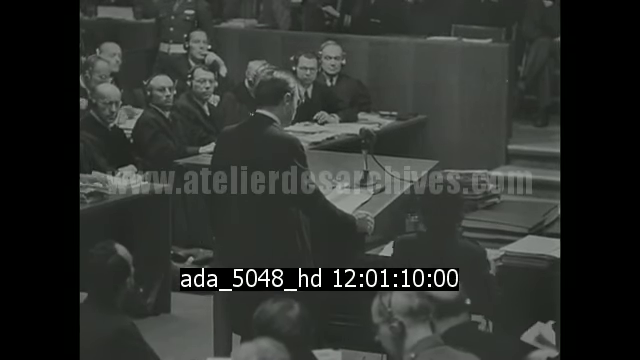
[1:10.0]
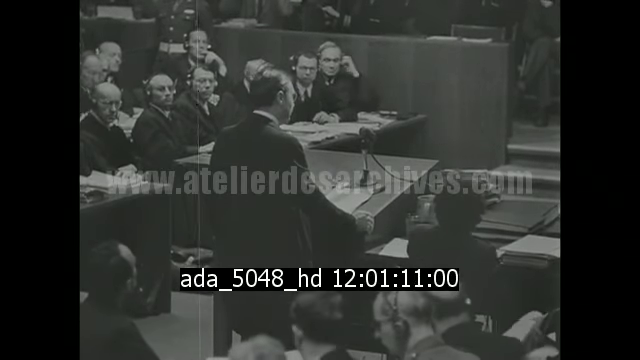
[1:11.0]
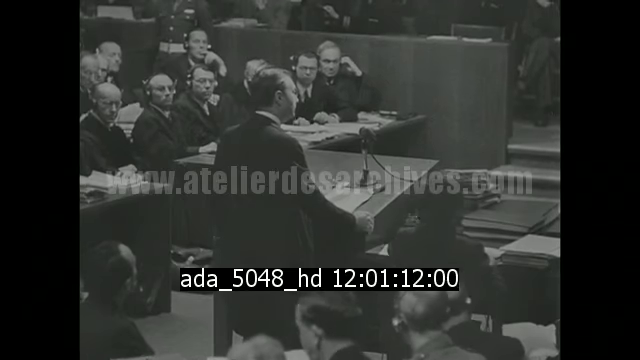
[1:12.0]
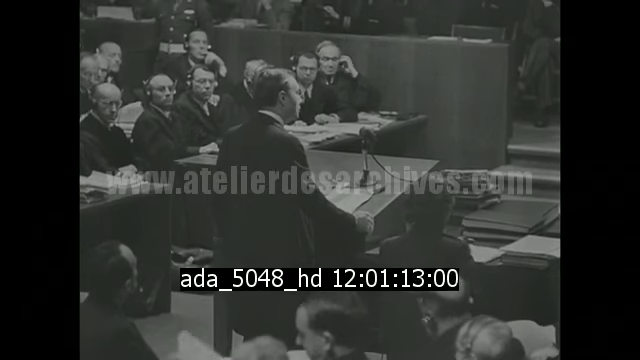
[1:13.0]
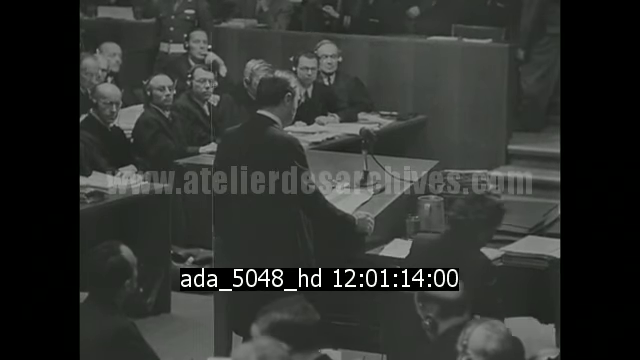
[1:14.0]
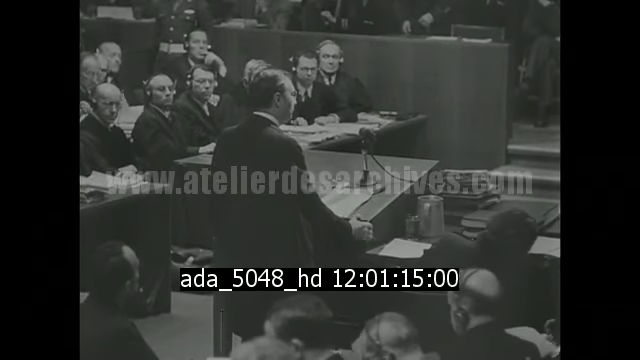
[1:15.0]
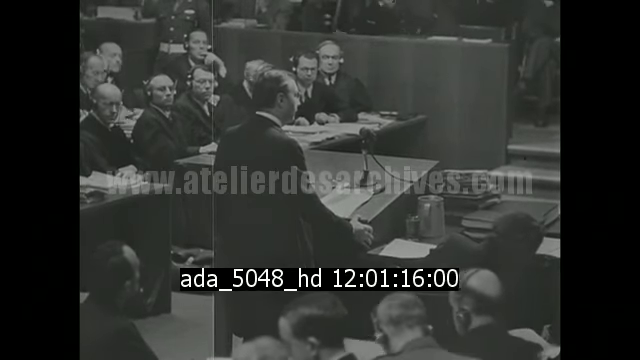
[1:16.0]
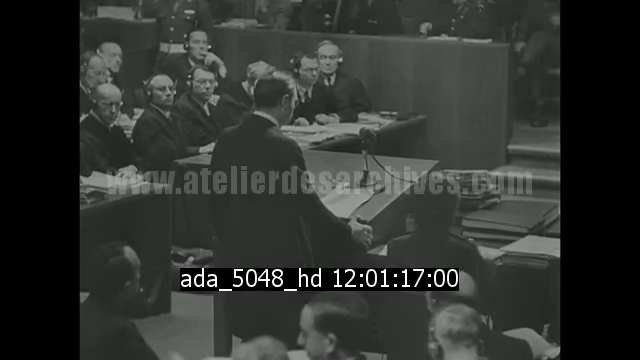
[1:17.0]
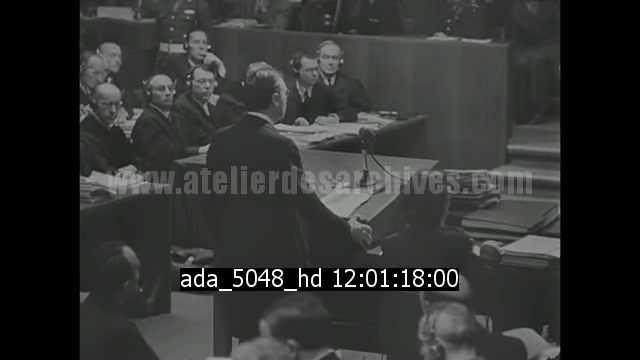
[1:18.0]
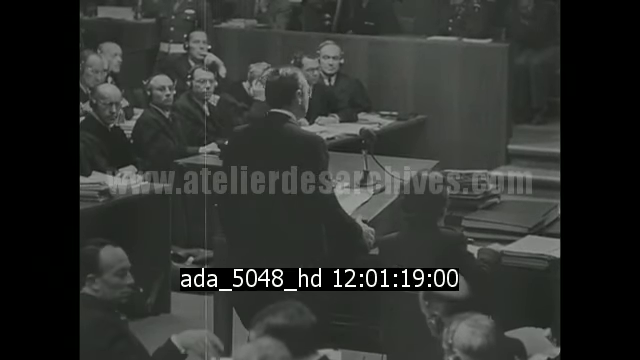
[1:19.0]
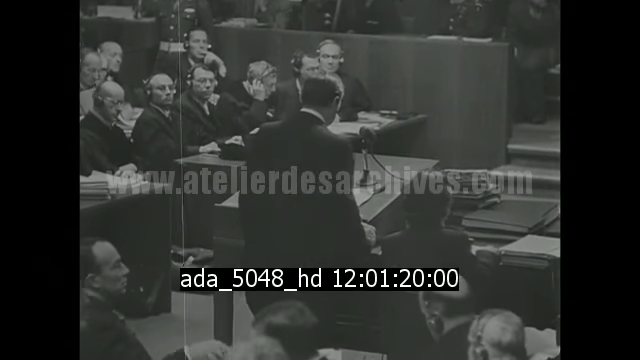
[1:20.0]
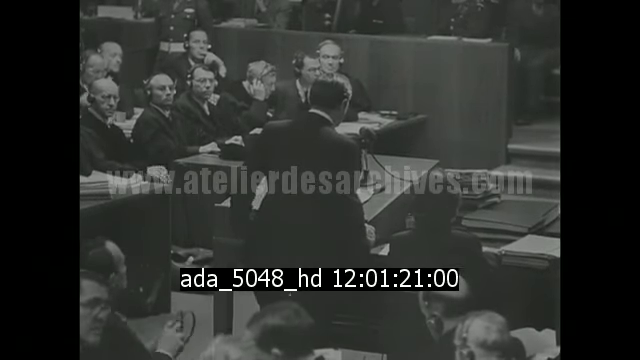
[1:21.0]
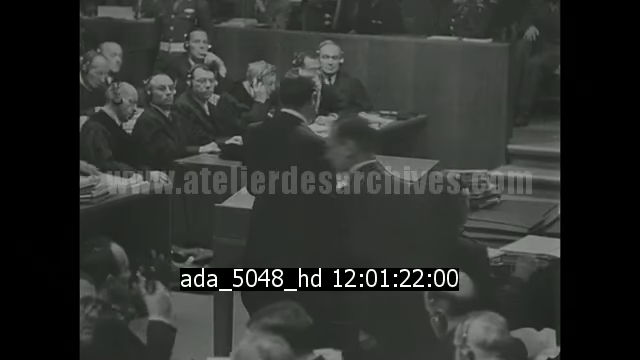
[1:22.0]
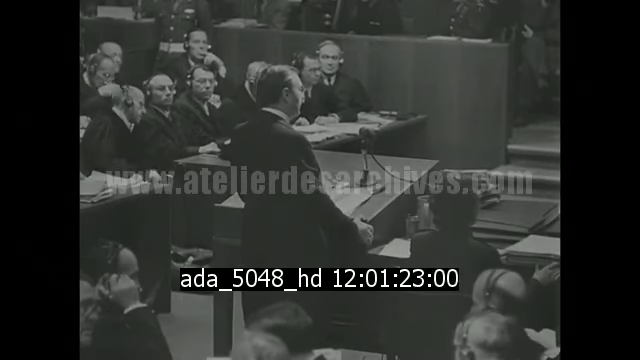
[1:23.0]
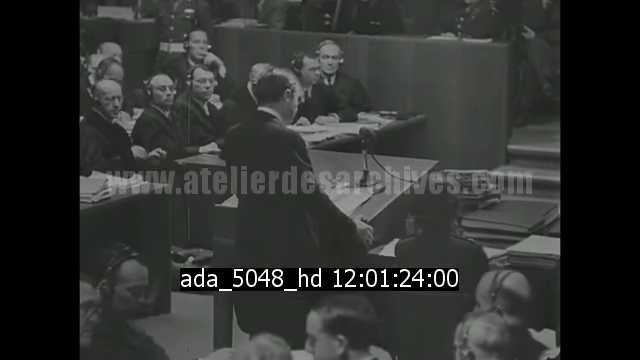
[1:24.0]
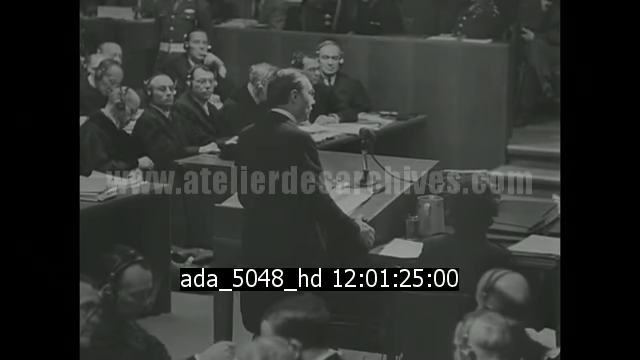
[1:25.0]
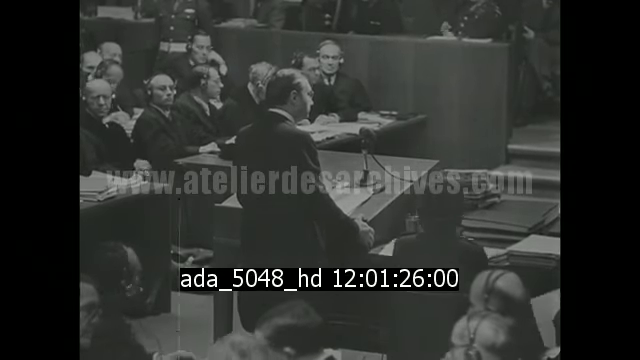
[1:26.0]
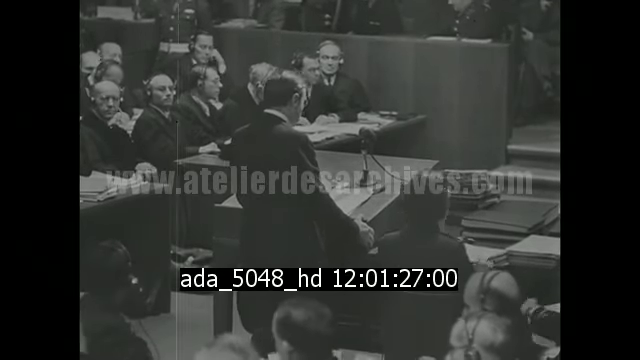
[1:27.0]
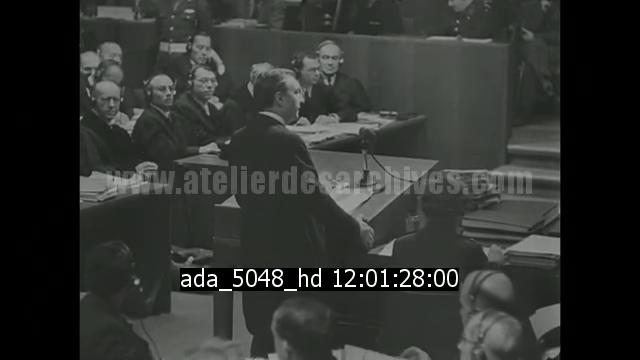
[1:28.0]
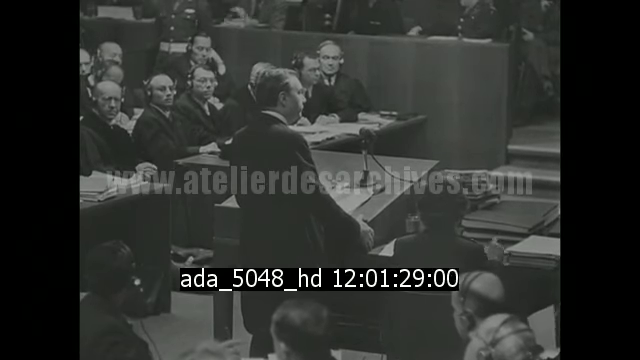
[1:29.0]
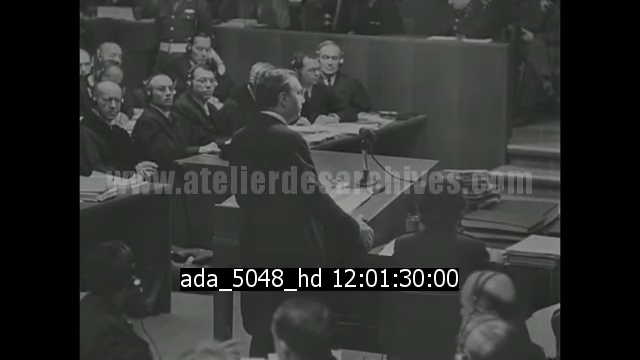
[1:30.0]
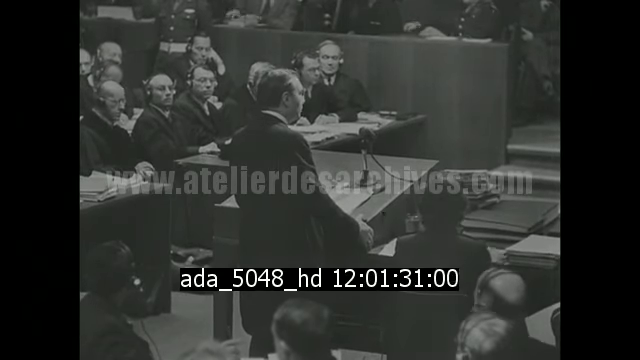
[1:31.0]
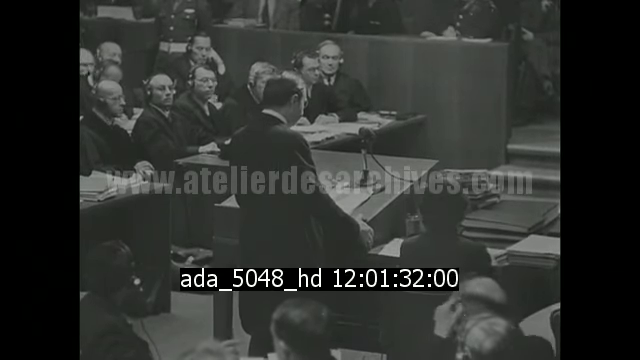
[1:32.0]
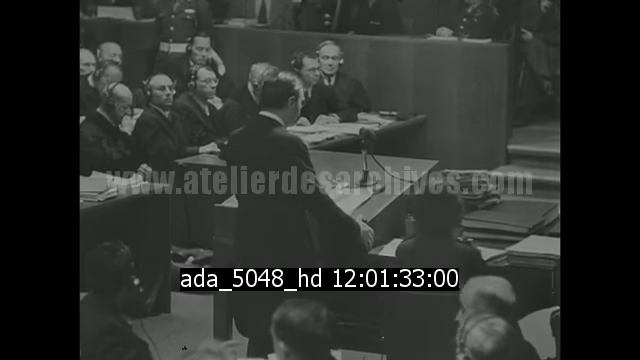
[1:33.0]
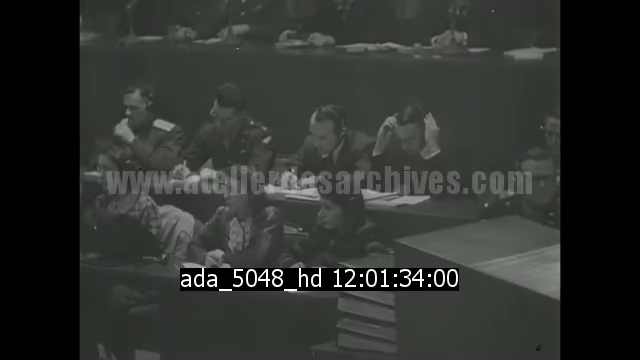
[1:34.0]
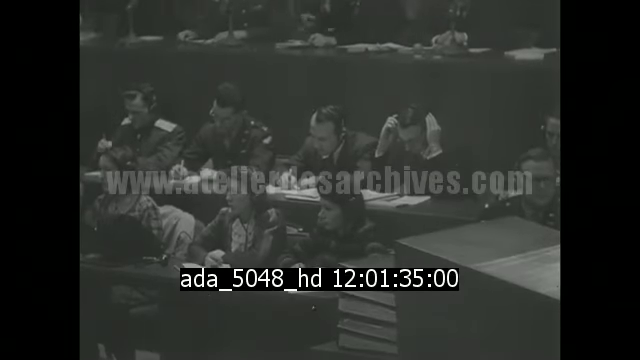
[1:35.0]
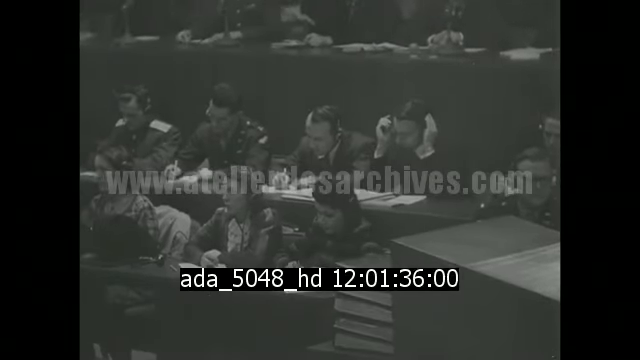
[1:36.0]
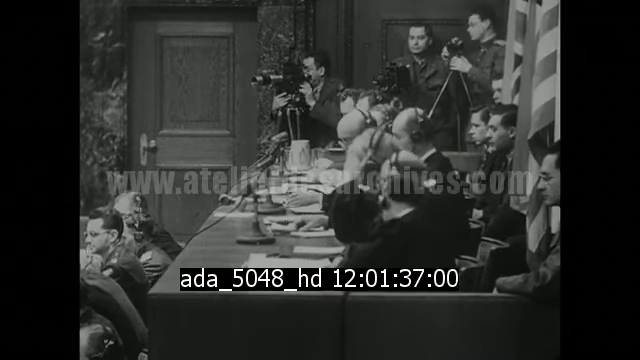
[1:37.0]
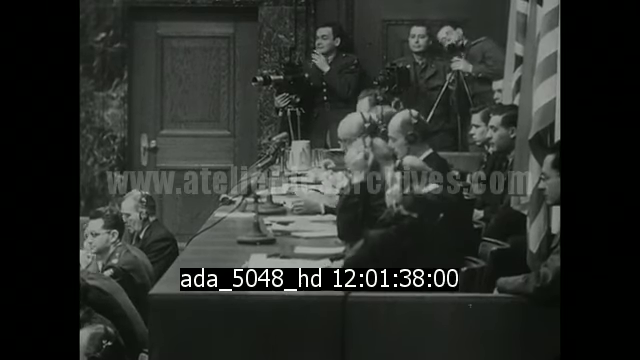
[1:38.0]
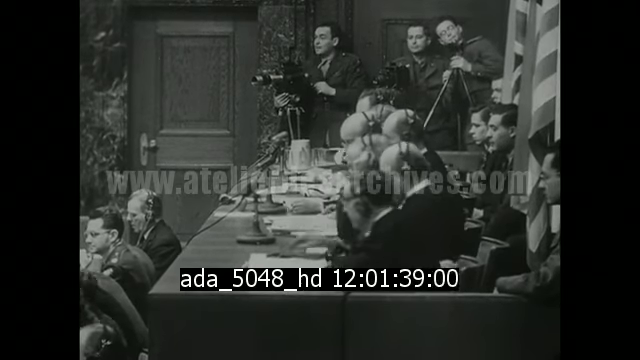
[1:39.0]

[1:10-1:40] Prosecutors and lawyers are speaking in the courtroom where the war criminals are on trial. American and British flags are in the background, and the people in the background are mostly men.